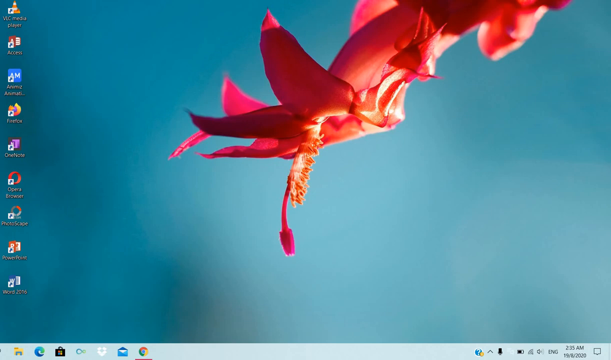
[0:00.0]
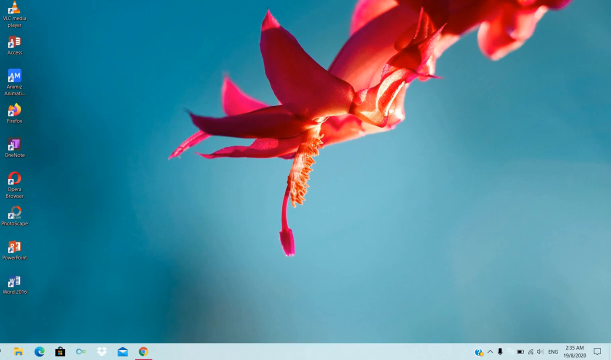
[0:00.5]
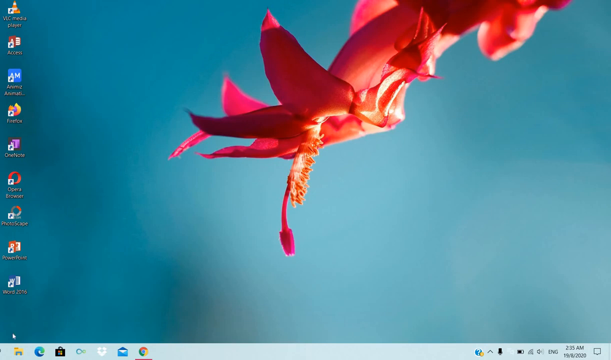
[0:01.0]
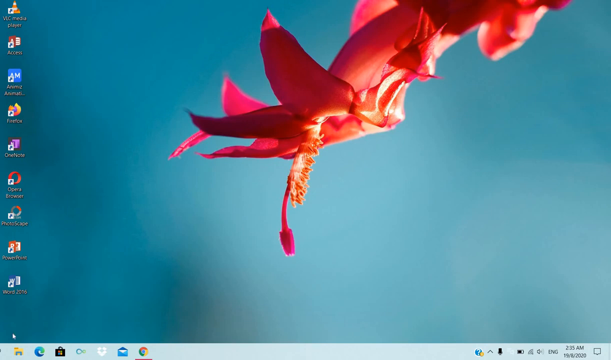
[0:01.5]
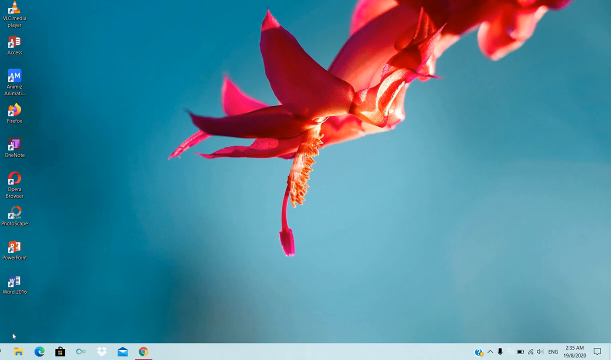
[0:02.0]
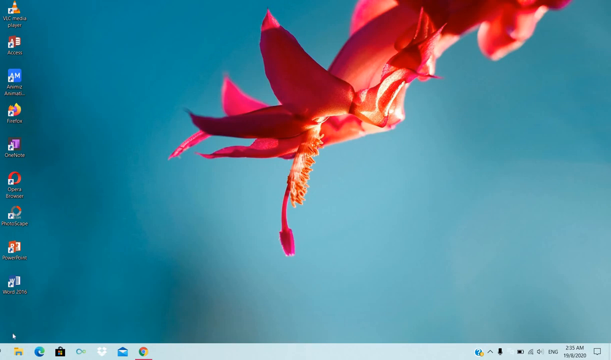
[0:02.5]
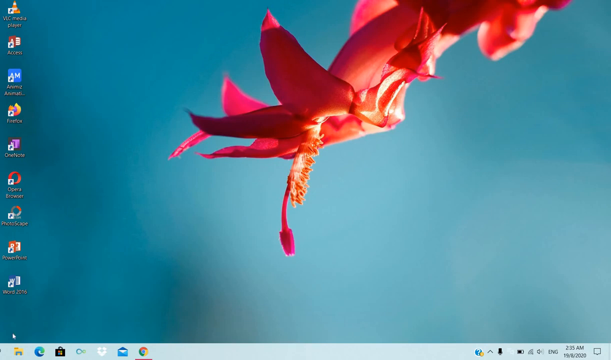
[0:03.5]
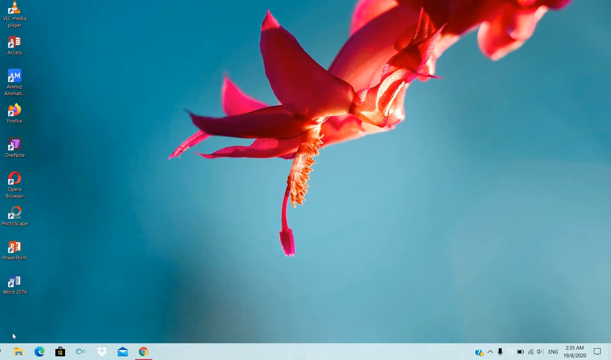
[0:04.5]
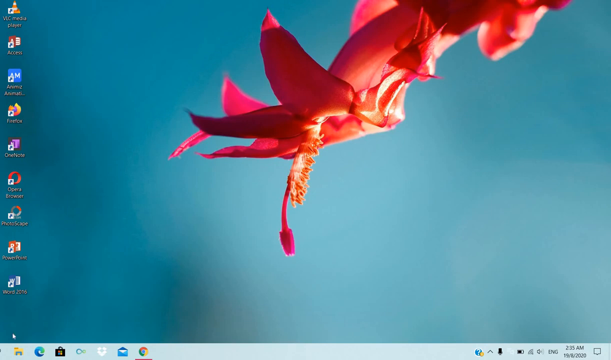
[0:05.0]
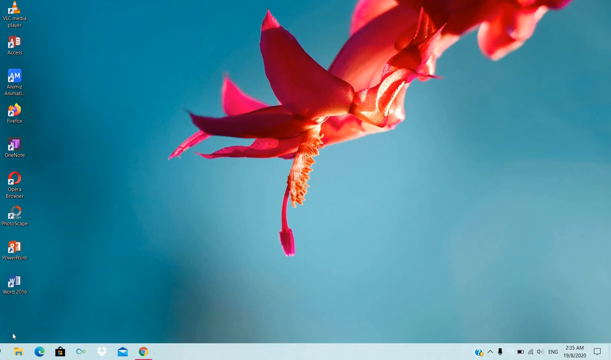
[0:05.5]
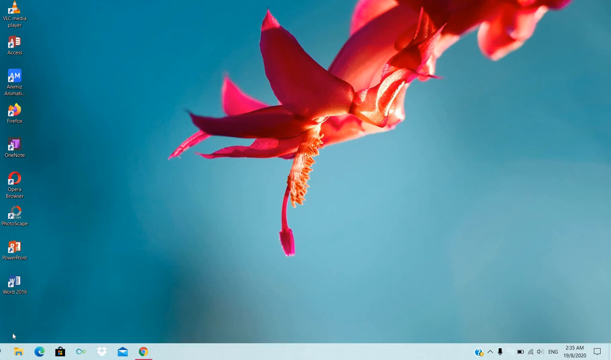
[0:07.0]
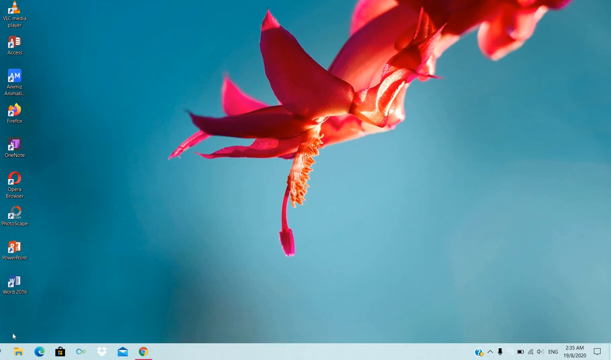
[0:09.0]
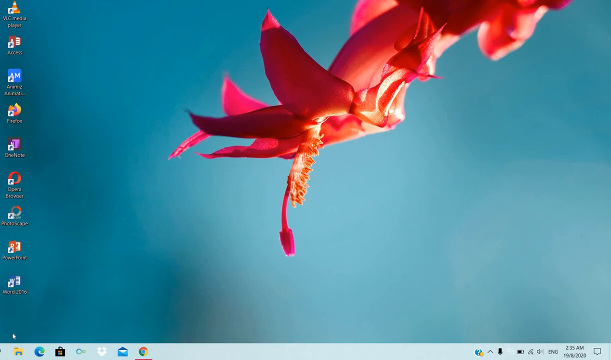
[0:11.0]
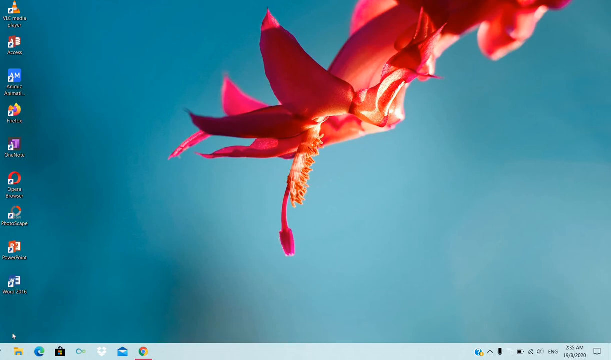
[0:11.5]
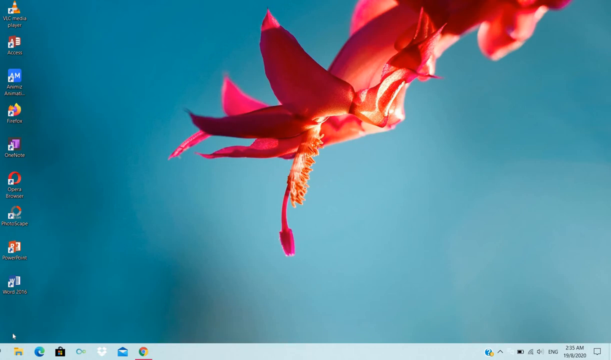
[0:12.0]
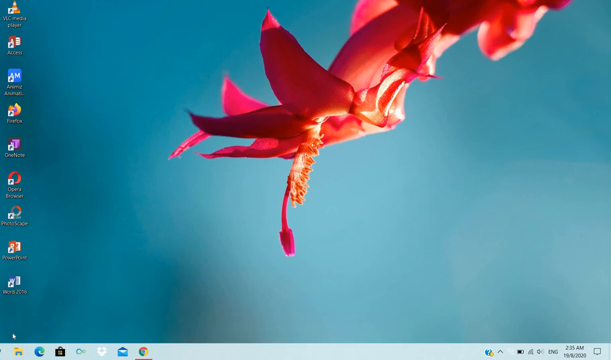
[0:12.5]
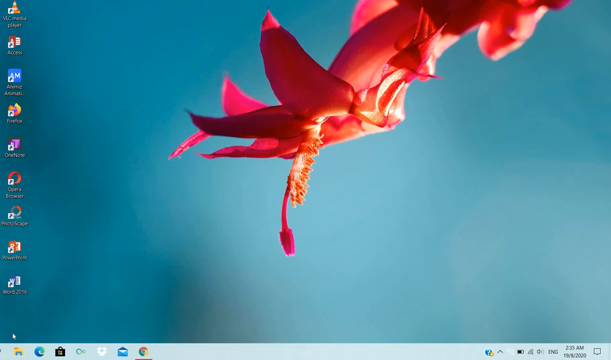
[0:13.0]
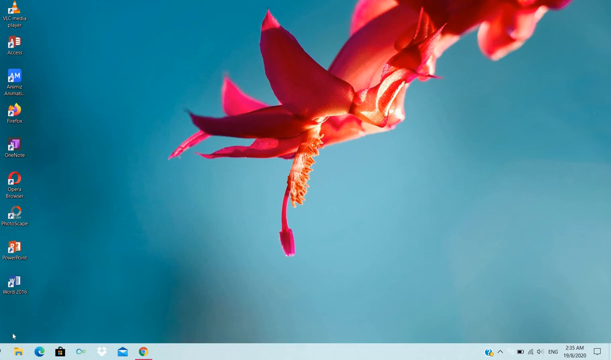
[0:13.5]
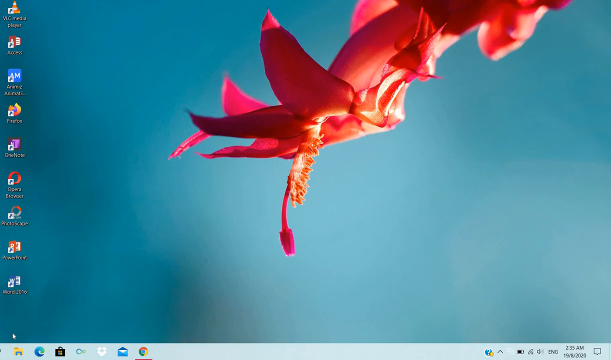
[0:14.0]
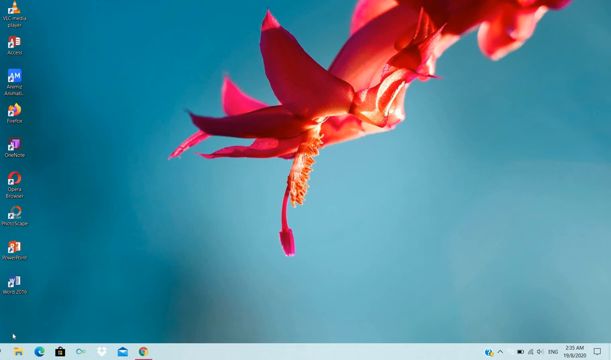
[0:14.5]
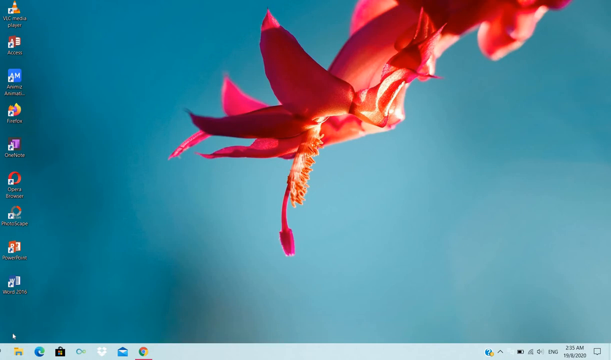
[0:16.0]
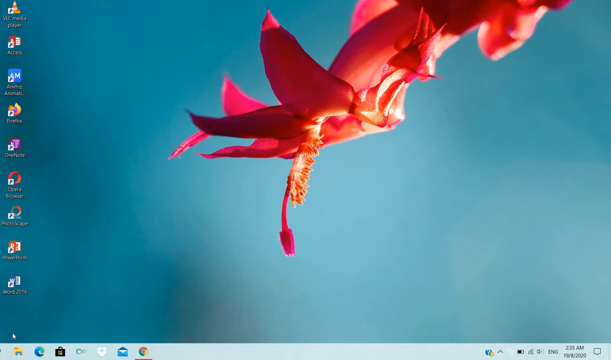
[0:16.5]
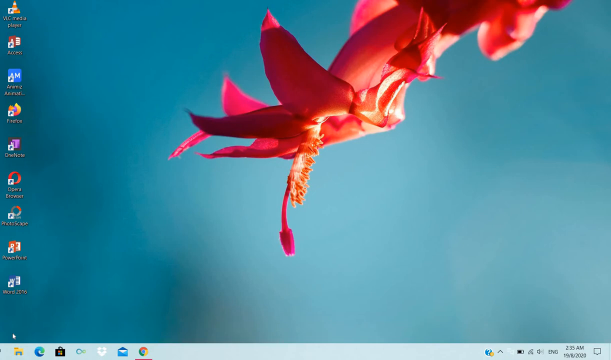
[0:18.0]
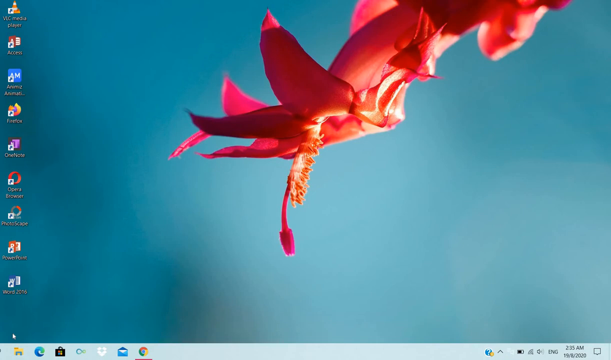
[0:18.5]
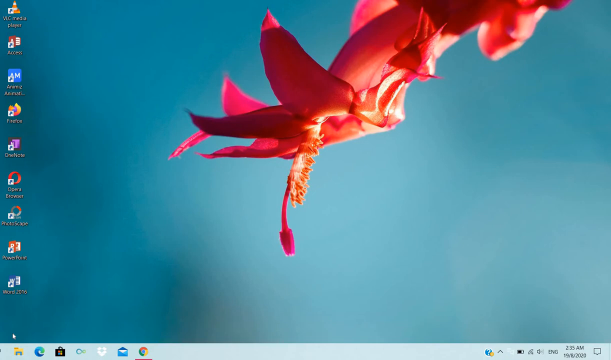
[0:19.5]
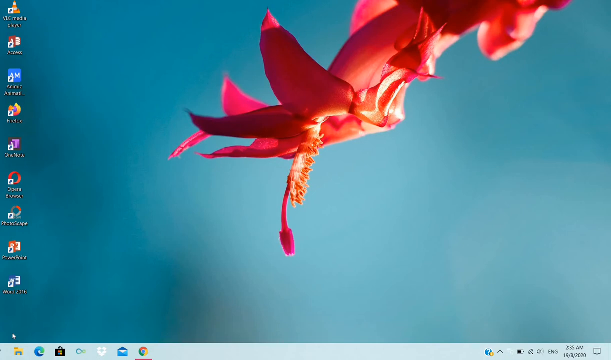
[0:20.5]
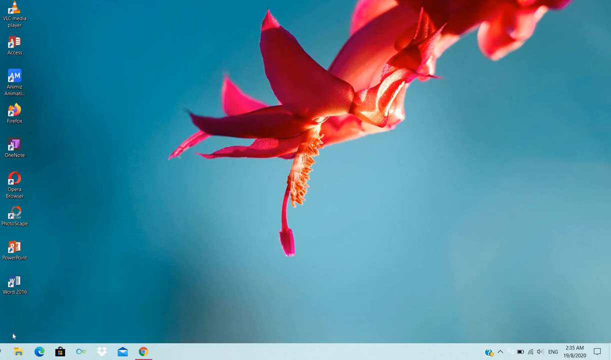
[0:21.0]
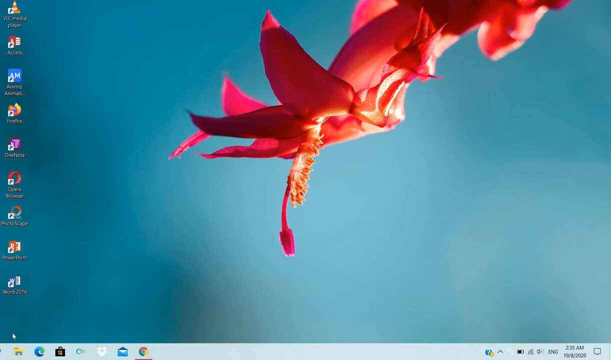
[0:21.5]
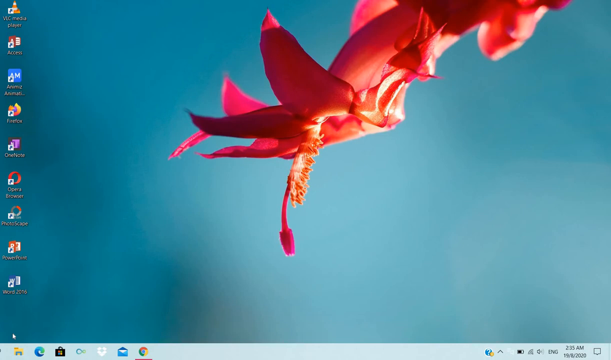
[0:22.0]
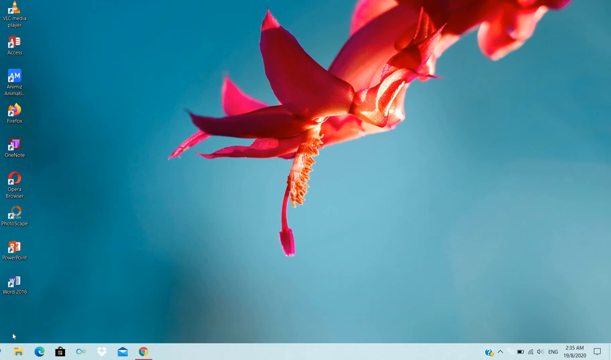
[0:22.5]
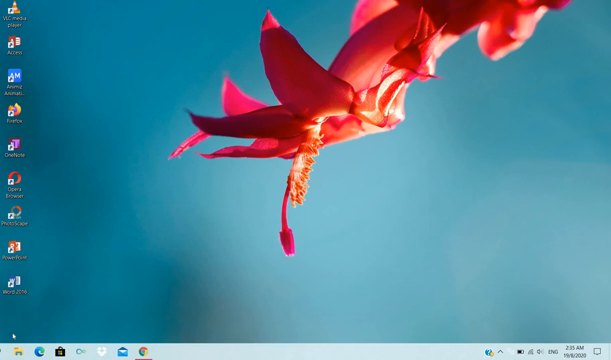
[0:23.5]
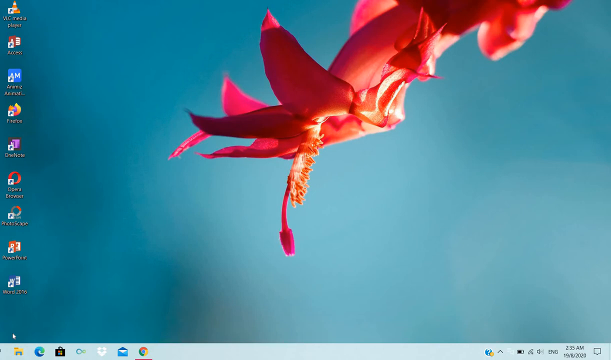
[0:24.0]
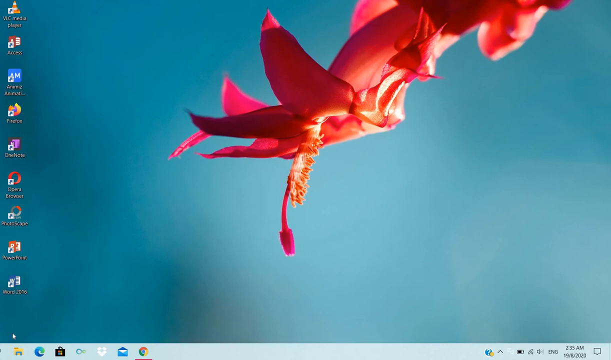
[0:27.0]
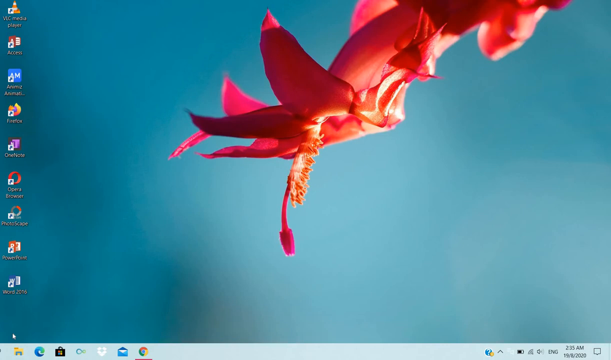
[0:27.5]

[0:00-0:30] A Windows desktop is on screen, and nothing is happening yet. At the bottom of the screen is a light gray taskbar with many icons, among them a Google Chrome icon underlined by a red line, apparently indicating that the browser is open in the background. The desktop background is blue in varying shades; it looks like it could be something blurred, or like the sky with different depths of blue. In the forefront, towards the top right, there is a reddish-pink, slightly orange flower. The flower is sort of long, with petals at the bottom and a long, very bright pink stamen.